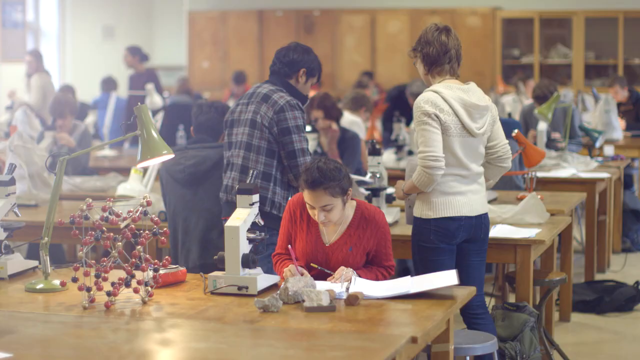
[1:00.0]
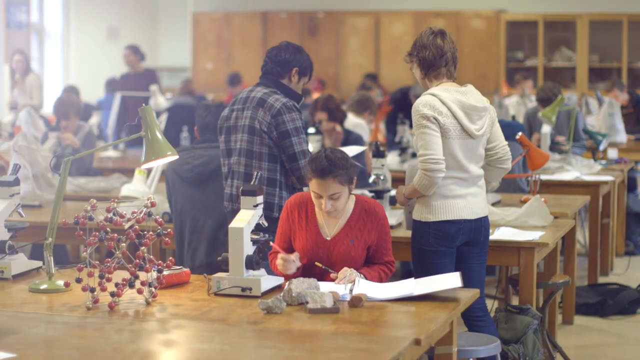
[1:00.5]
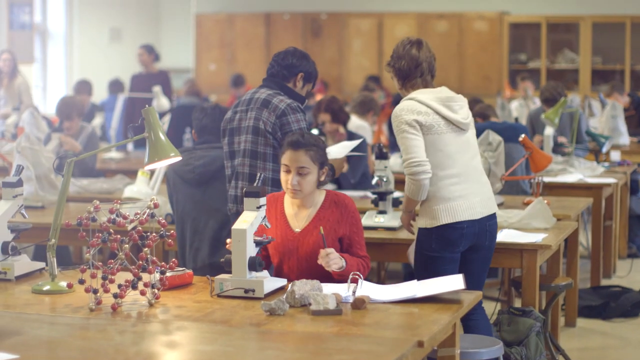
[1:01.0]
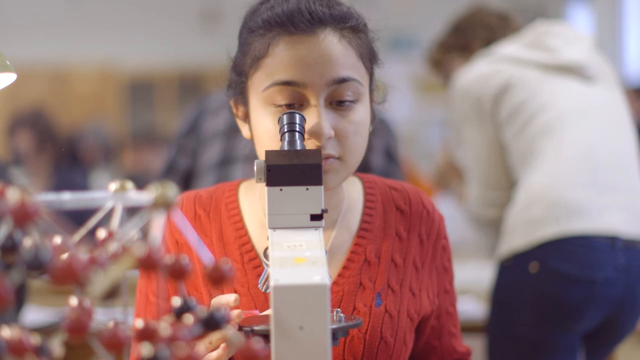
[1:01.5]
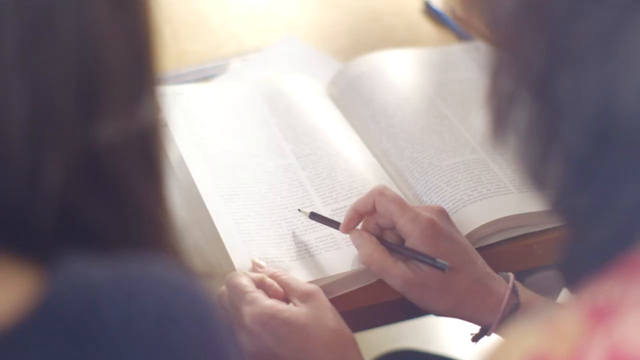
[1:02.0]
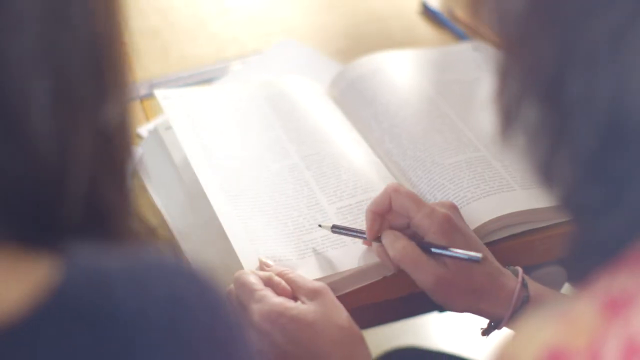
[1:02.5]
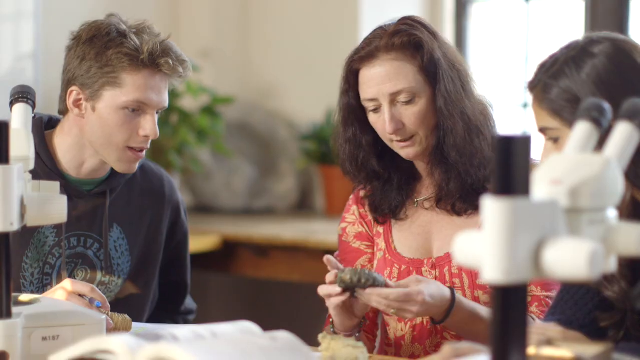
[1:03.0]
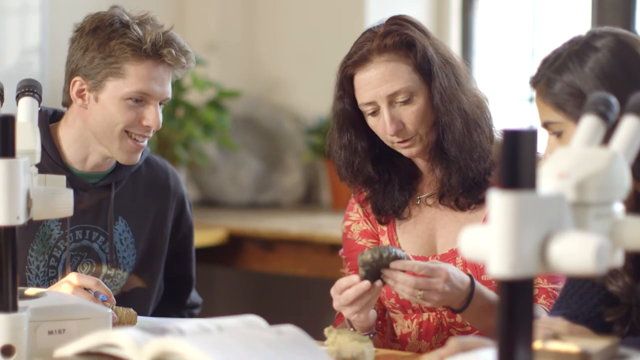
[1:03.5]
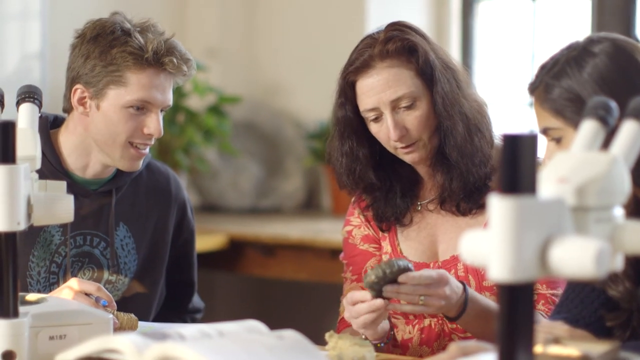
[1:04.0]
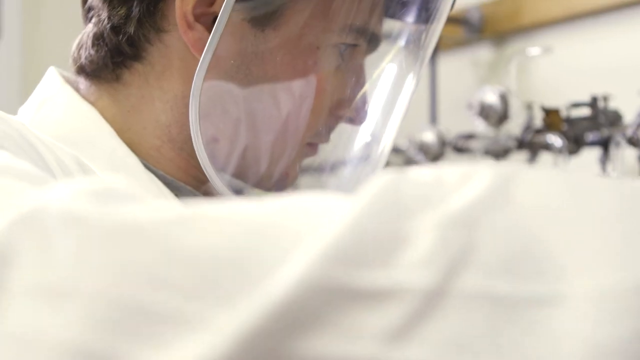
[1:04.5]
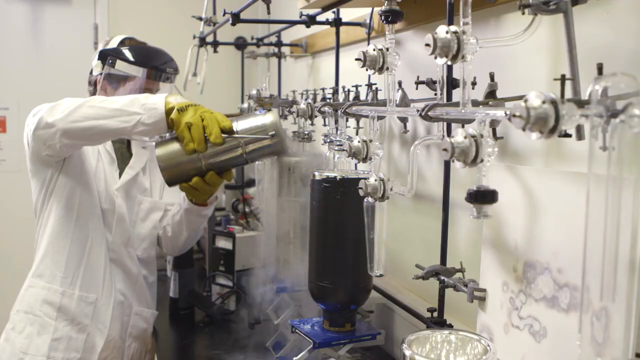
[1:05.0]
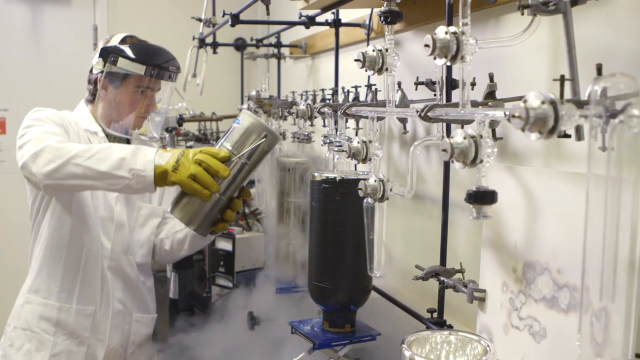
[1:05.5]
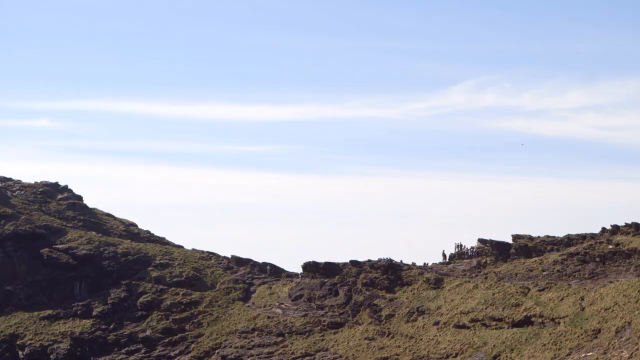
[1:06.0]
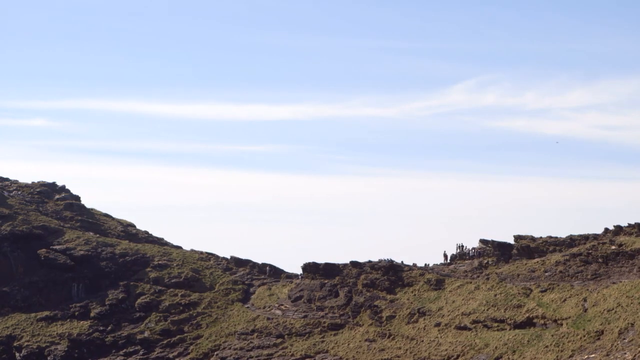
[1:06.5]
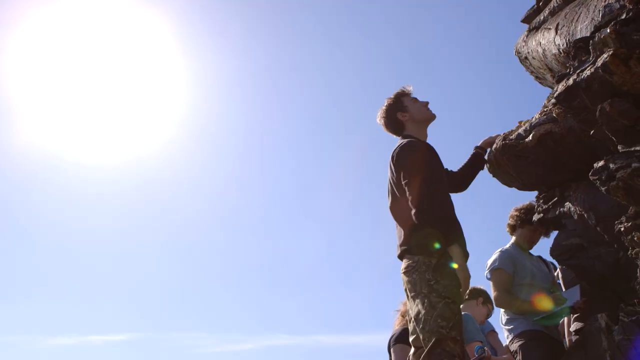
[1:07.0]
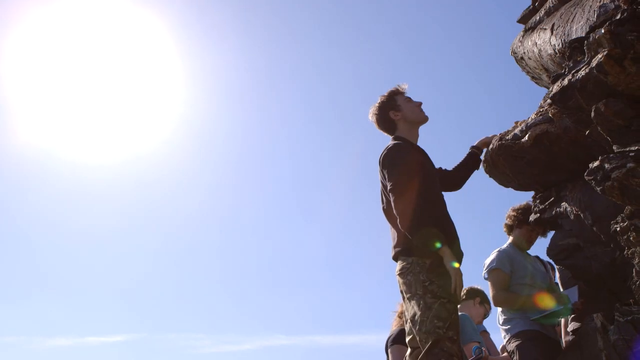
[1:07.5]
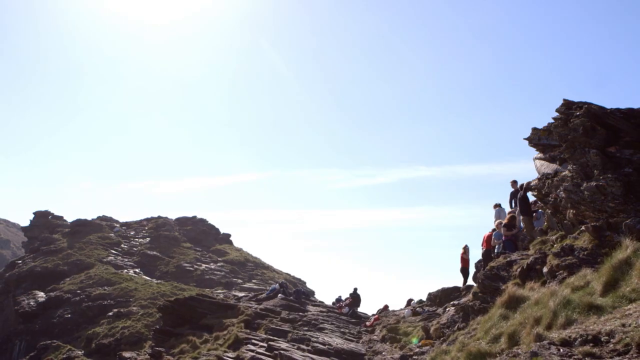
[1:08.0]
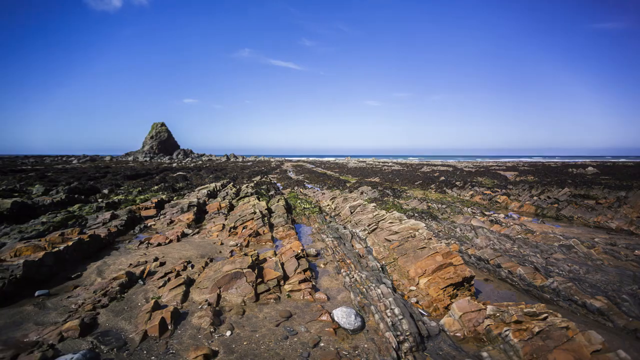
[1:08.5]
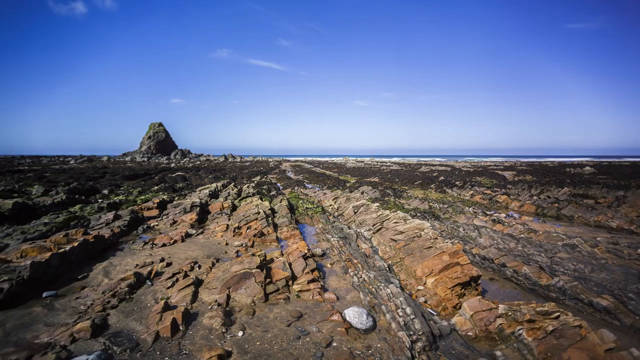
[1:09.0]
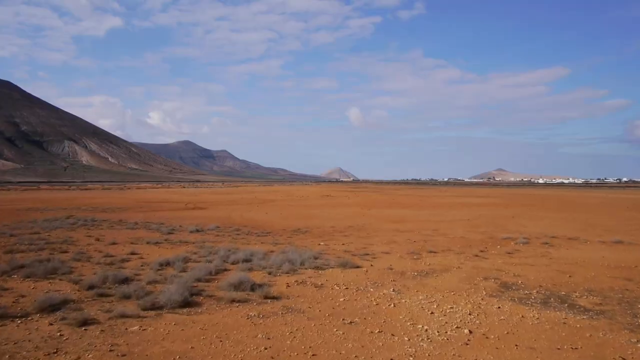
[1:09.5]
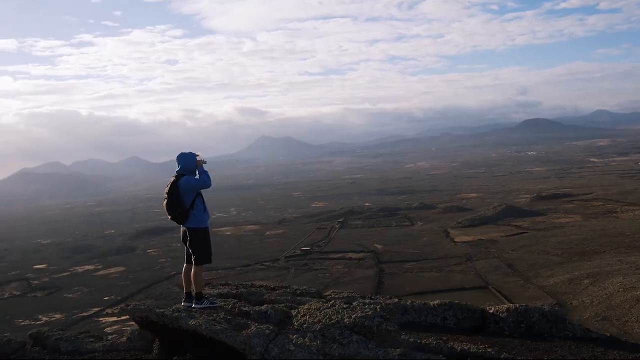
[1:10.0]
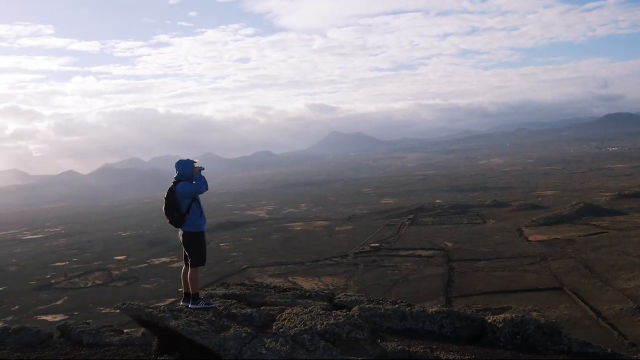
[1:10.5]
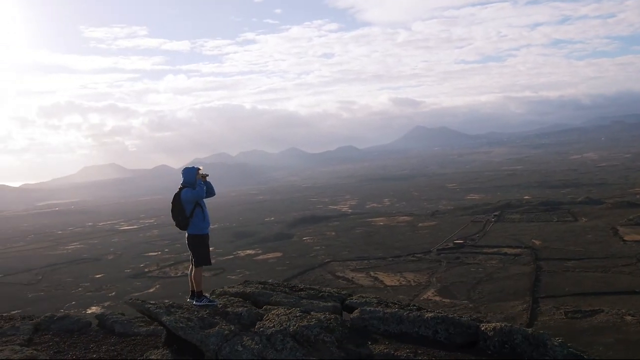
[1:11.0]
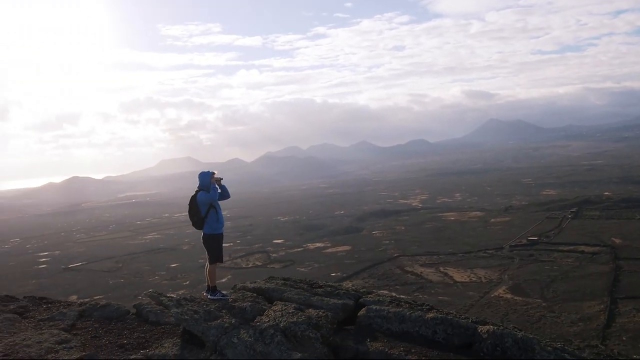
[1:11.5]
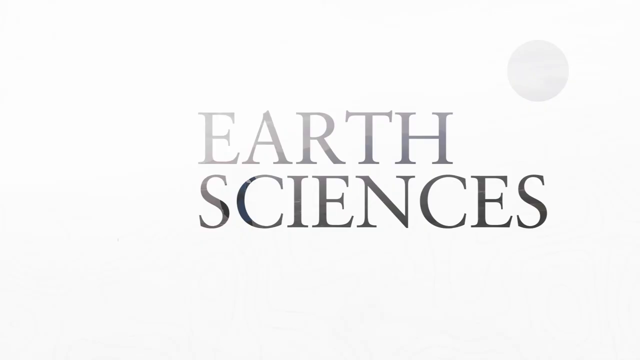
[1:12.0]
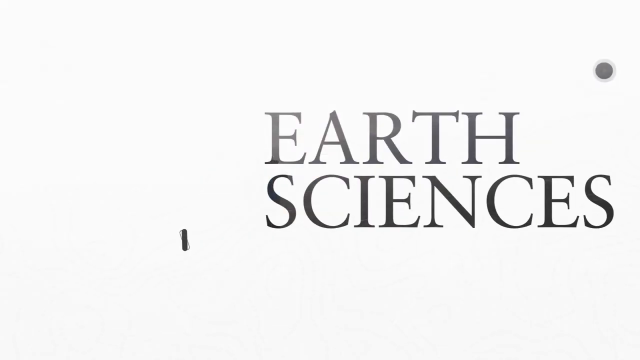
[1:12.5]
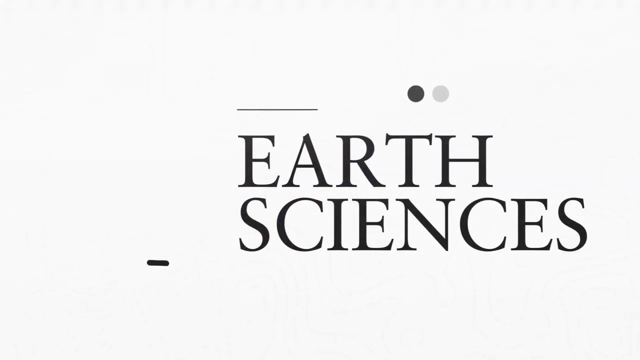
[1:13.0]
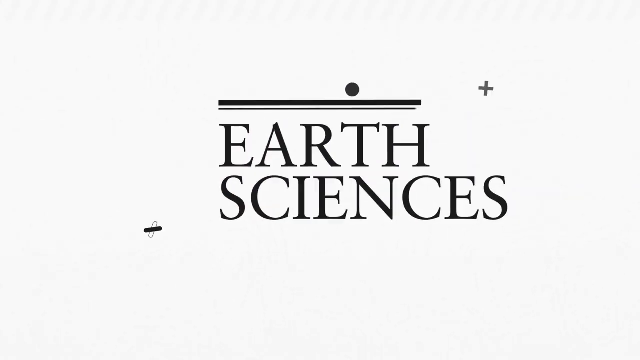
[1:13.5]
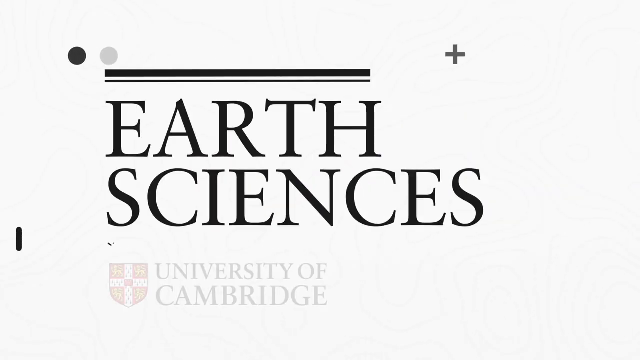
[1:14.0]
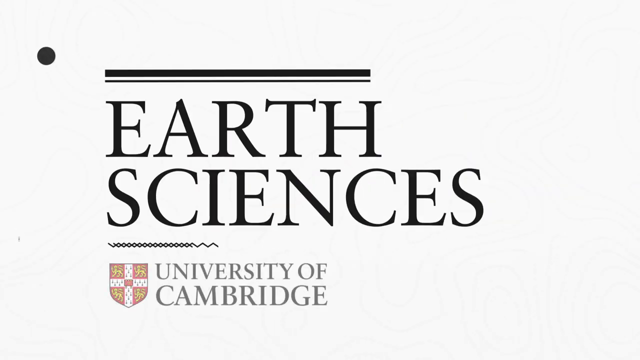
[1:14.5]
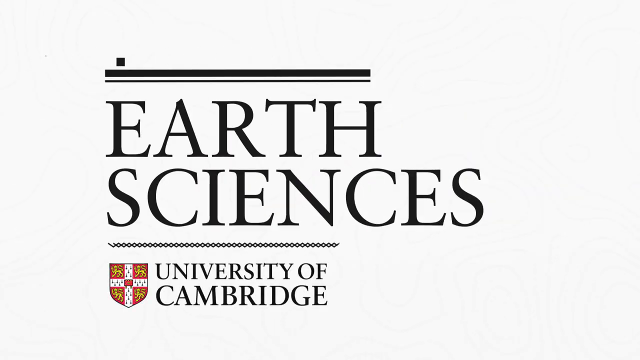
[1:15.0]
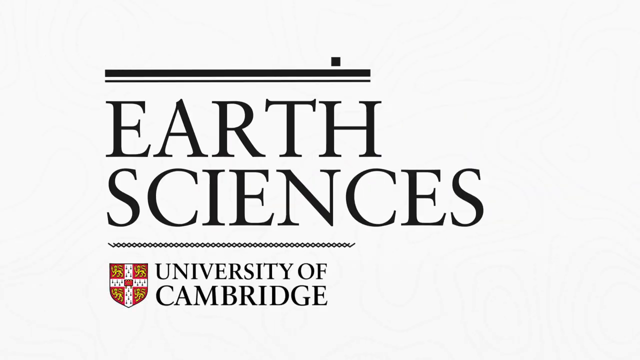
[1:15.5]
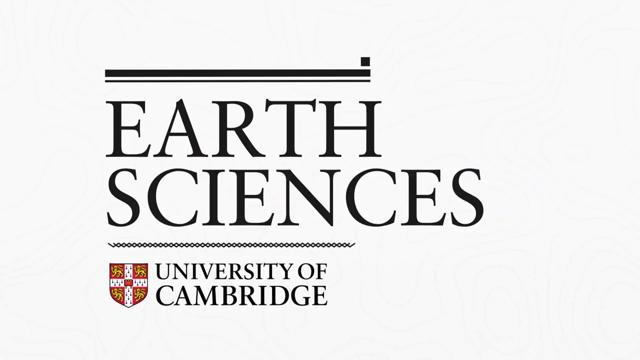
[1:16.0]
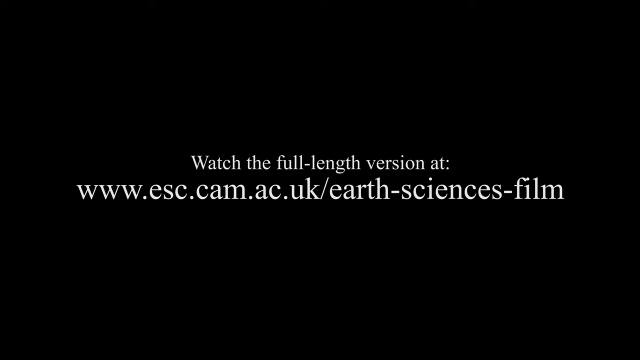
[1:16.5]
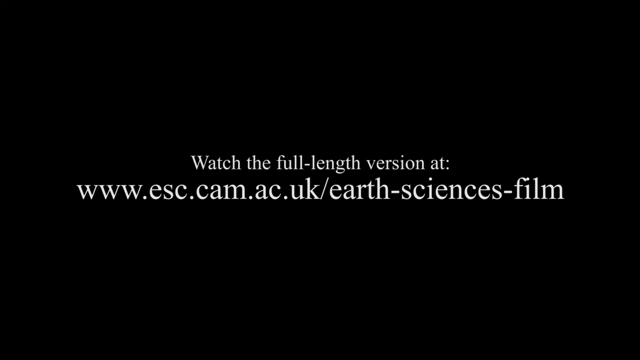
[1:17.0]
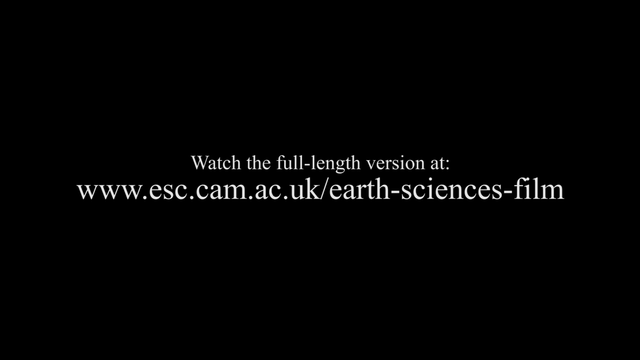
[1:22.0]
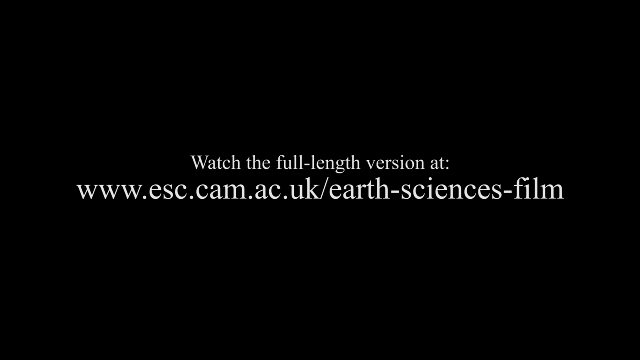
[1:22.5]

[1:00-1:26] Some people are in a classroom, looking like they are in some sort of science class. A woman in the front has a microscope in front of her and writes something down in her notebook; then they stand up and the woman looks into the microscope. The camera changes to focus on the woman's face, with everything else blurred out. She is Asian, wears a red sweater, and has long dark hair in a bun. The scene changes to somebody at a desk reading an unopened book, holding a pencil in their right hand. Next, three people are at a desk: a man on the left and two women on the right, with a microscope on the left side of the screen and another microscope on the right side that covers one of the women's faces. The woman in the center holds a rock and looks down at it. The scene changes to a man in a lab coat with a mask on, pouring liquid from a silver container he holds into another container, which then has smoke coming out of it. An image follows of what appears to be the top of a mountain or a hill with blue skies above. A couple of men stand on the top of a mountain in front of a blue sky, with the sun in the upper left corner. A wide view shows this mountain, a rocky area with very blue skies in the background, and then the scene changes to a desert type area. A man stands on top of a mountain with binoculars, looking out, as the camera pans around him. The scene then changes to text on a screen that says "Earth Sciences"; a line appears on top, a little circle flies to the left, and at the very bottom it says "University of Cambridge". On a black screen, text says "watch the full length version at www.esc.cam.ac.uk/earth-sciences-film", and it stays on that screen for a while.